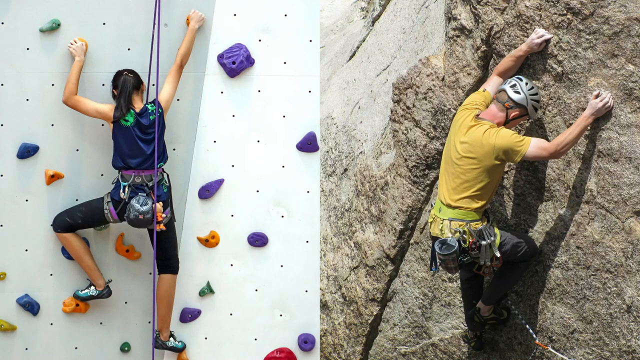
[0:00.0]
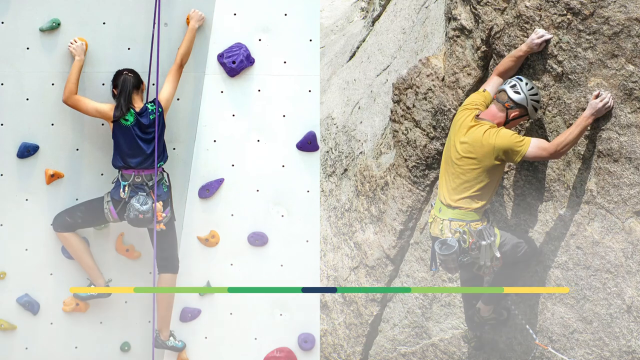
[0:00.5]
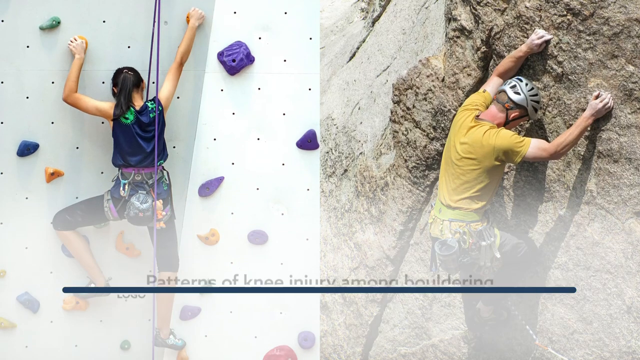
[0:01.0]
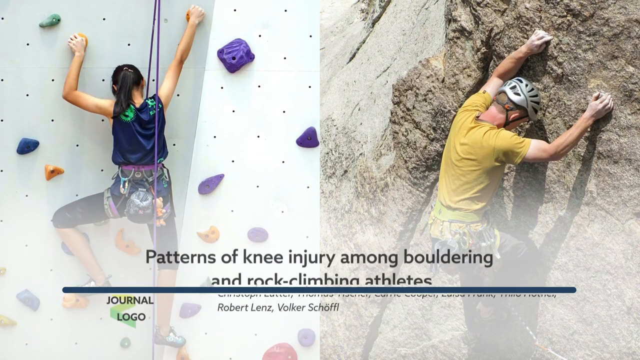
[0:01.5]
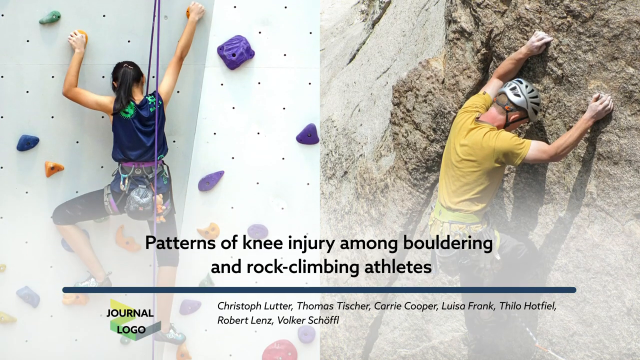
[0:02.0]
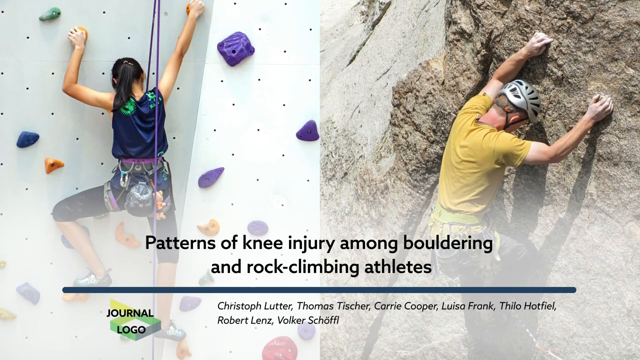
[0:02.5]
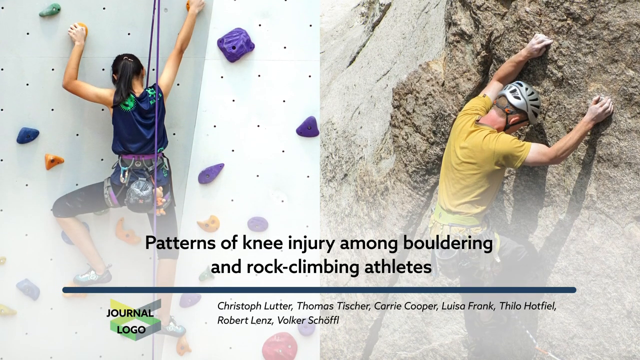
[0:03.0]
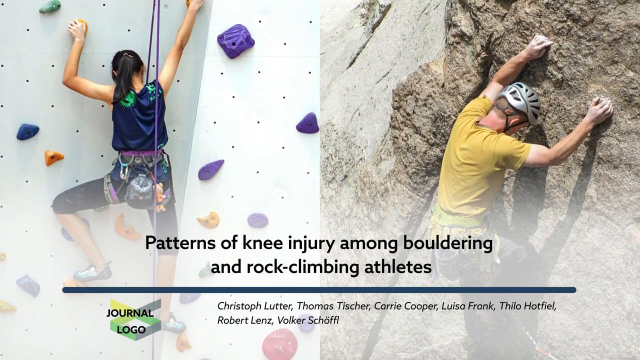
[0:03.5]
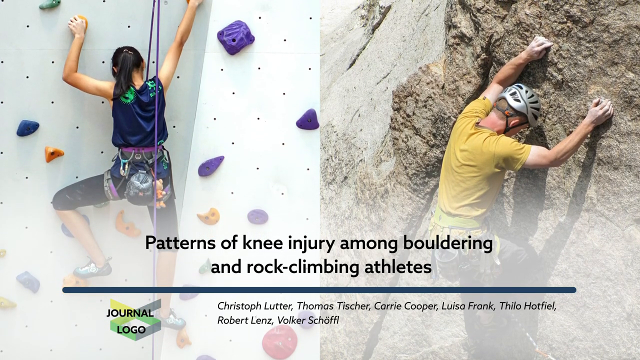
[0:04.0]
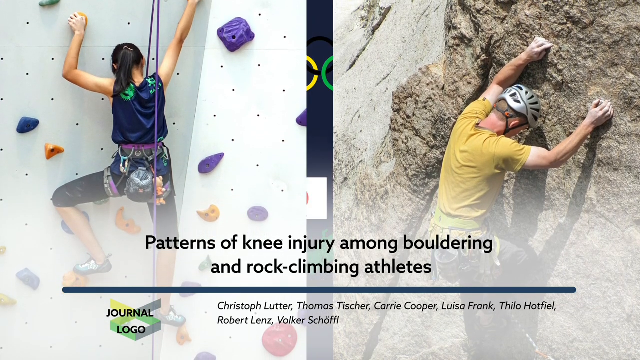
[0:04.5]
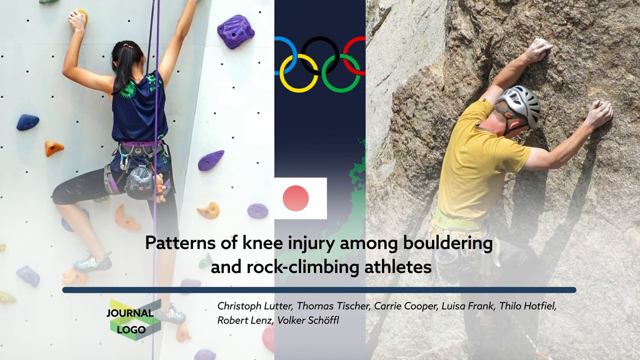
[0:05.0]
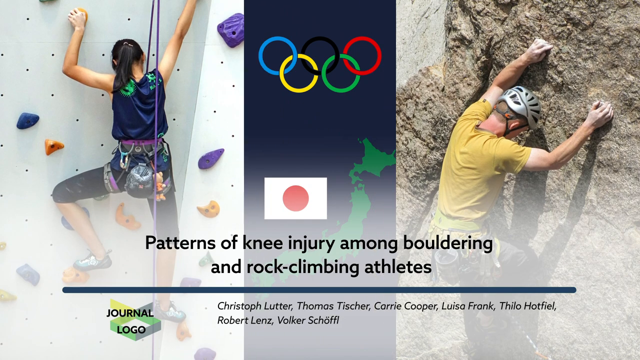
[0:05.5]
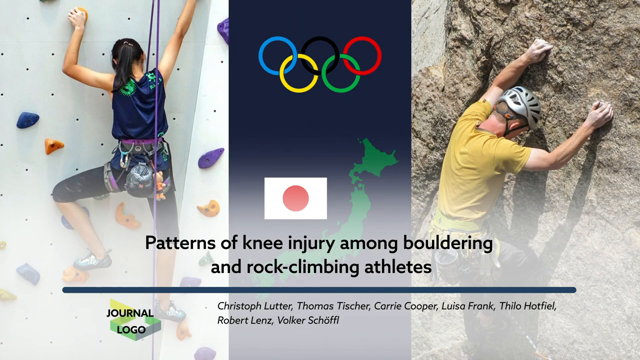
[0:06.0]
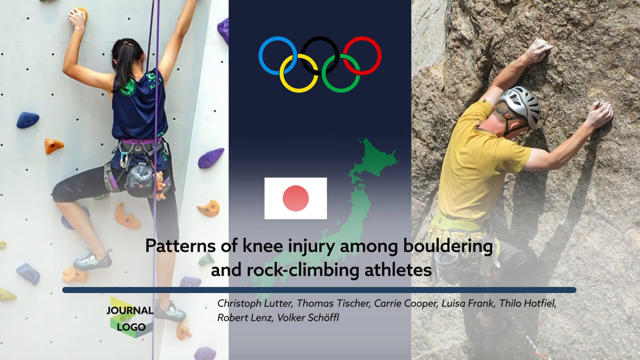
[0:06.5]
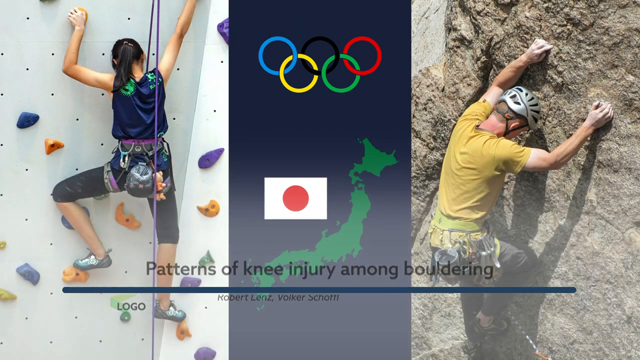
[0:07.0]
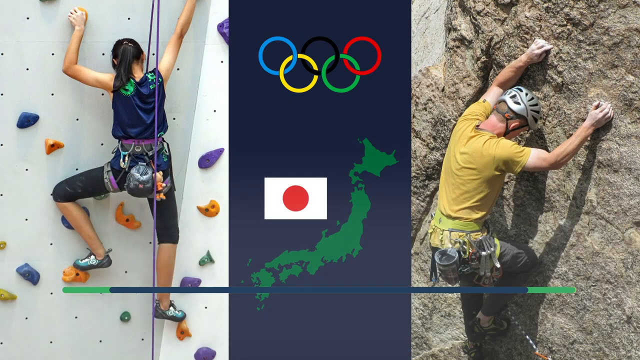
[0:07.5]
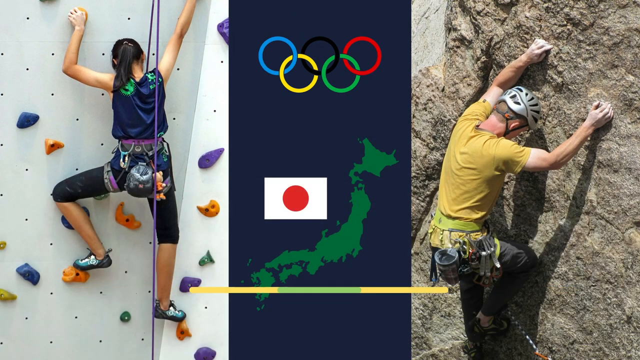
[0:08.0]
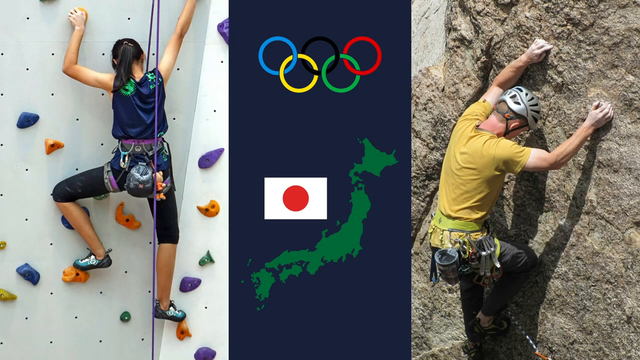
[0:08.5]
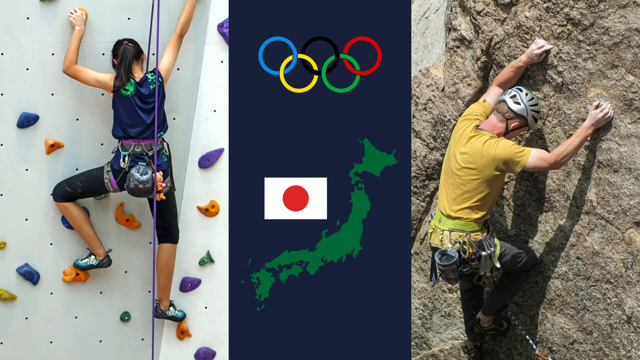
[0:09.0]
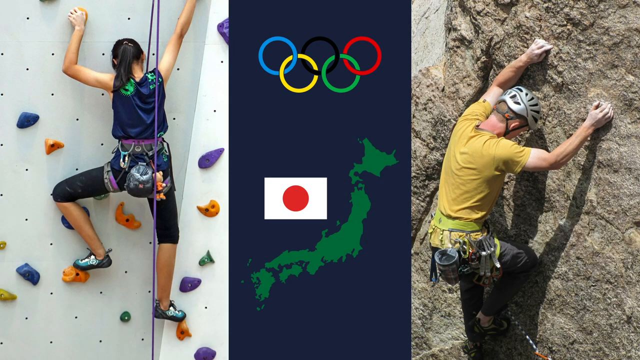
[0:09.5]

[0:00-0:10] Two people are shown climbing in two separate images, one on the left and one on the right. In the left image, a female climbs up a climbing wall like one at a climbing center. The wall is white, with blue, orange and yellow stones on it. Her face is against the wall. A purple rope runs up behind her back to the top of the screen and back down in front of her chest. She has a gray and pink harness on that goes around her waist and legs. The right image shows a man in a yellow shirt on the face of a cliff with brown rocks; he wears a gray helmet. Words appear at the bottom of the screen: "patterns of knee injury among bouldering and rock climbing athletes". The screen then kind of pans out, showing the islands of Japan, the flag of Japan above the island, and the Olympic rings.